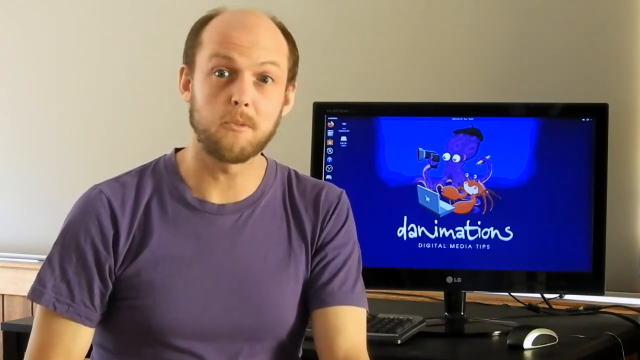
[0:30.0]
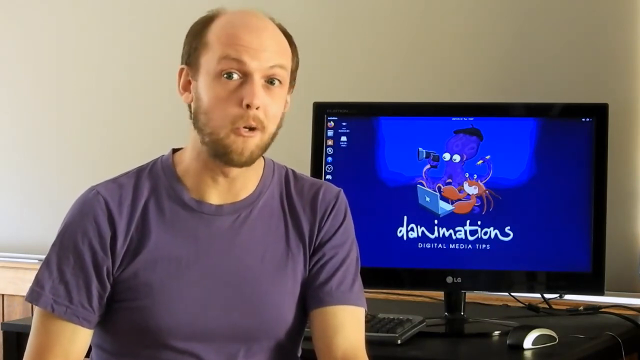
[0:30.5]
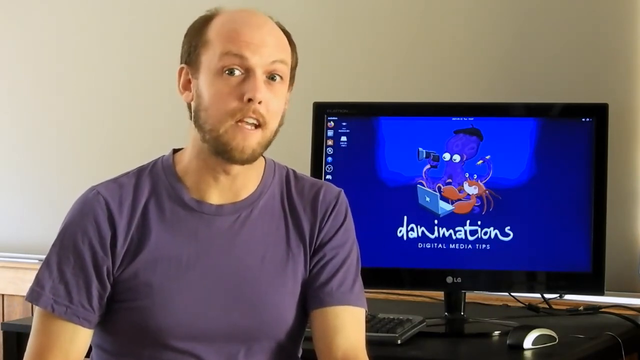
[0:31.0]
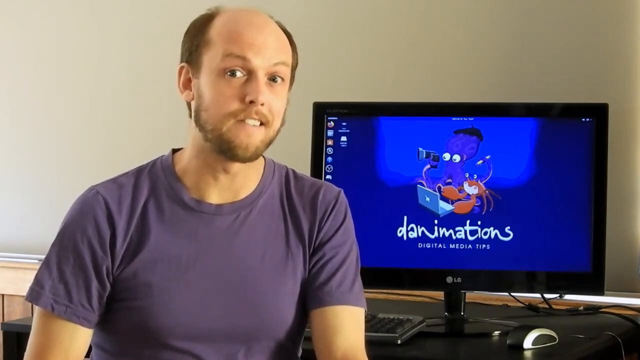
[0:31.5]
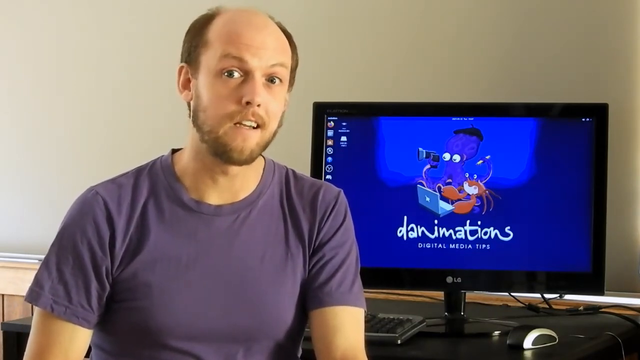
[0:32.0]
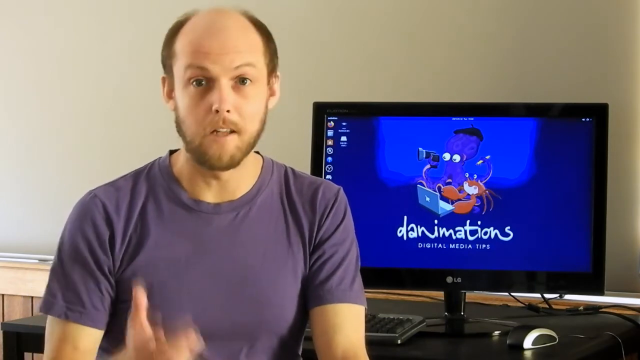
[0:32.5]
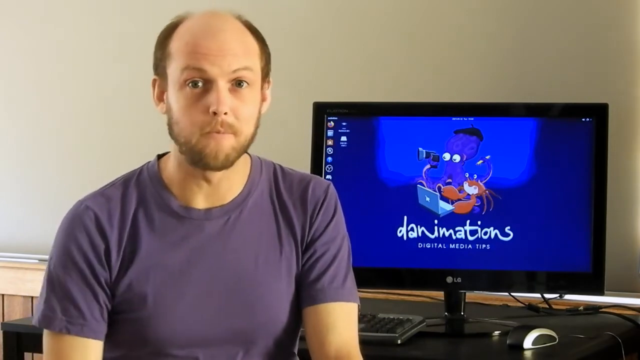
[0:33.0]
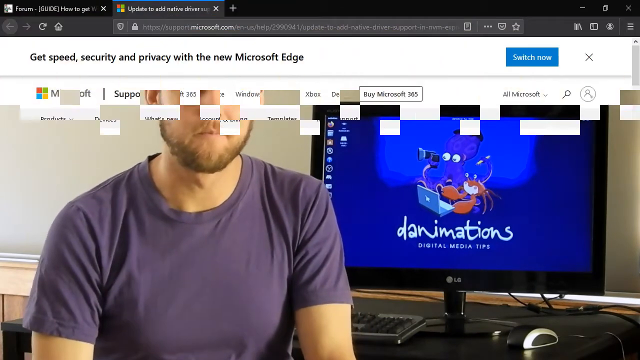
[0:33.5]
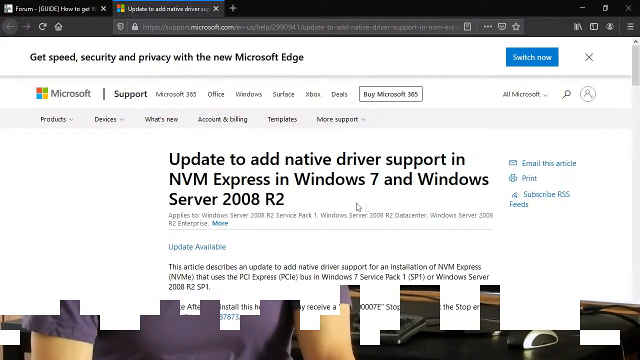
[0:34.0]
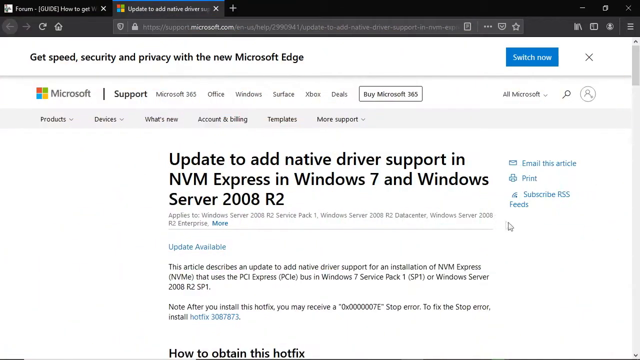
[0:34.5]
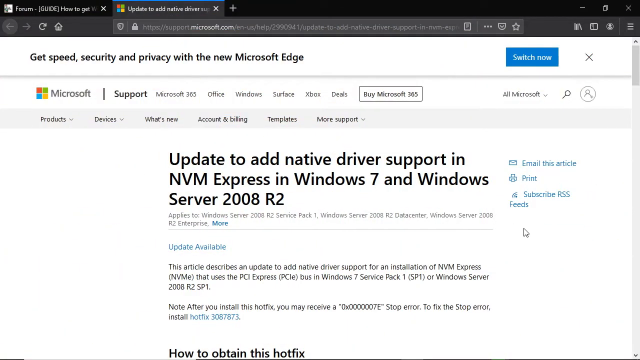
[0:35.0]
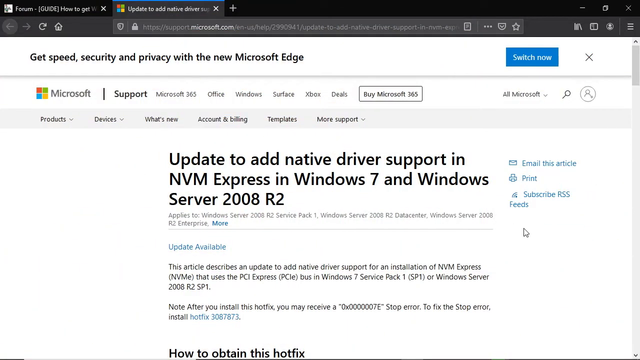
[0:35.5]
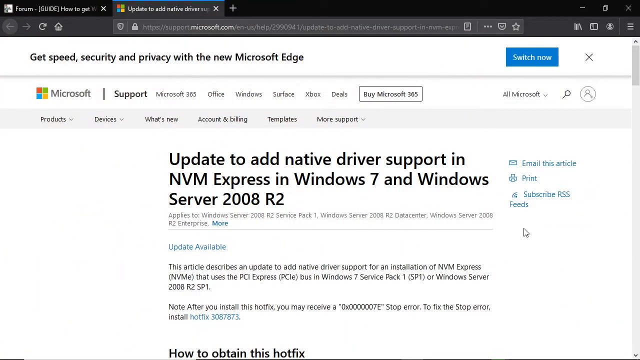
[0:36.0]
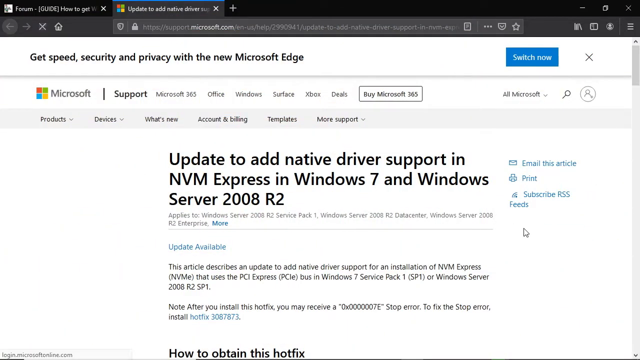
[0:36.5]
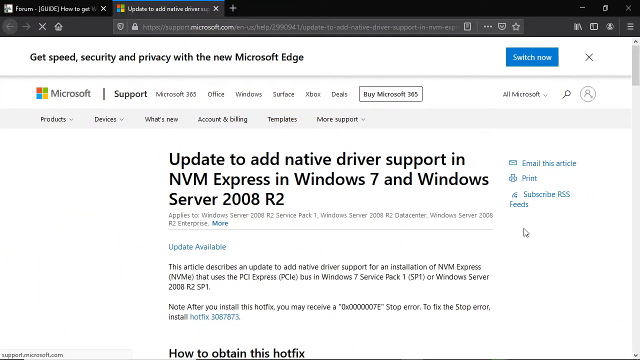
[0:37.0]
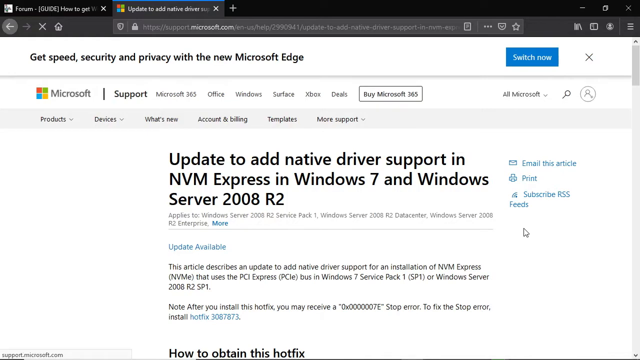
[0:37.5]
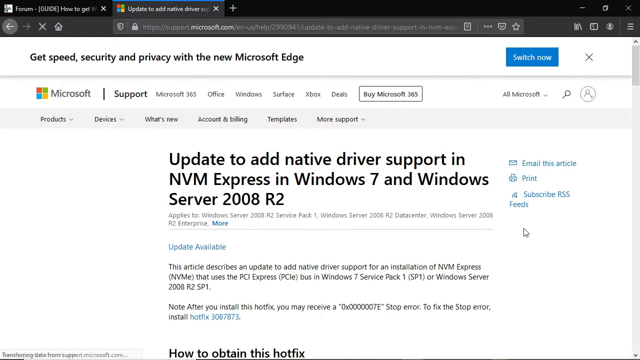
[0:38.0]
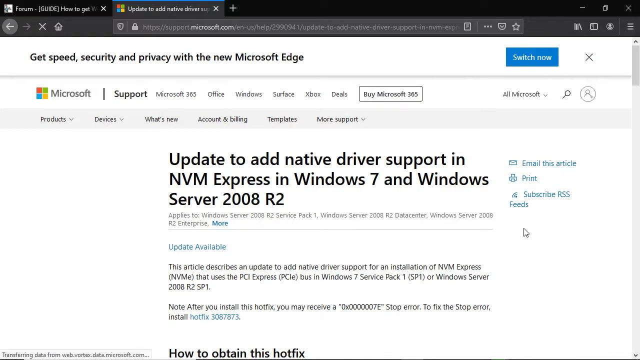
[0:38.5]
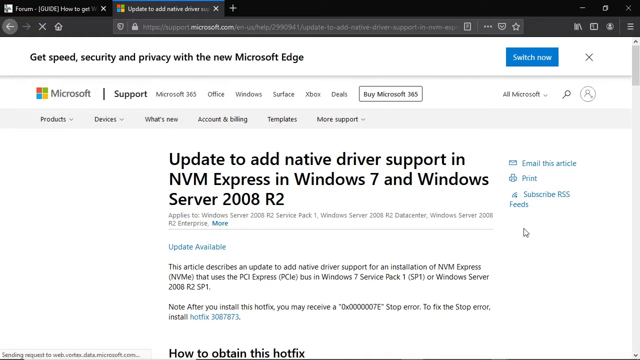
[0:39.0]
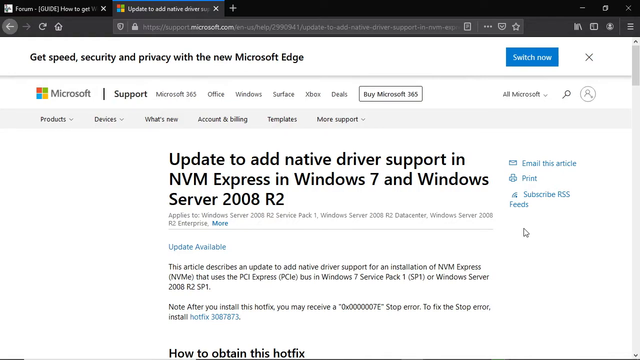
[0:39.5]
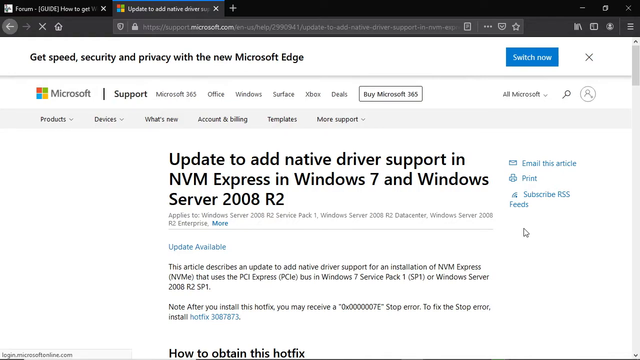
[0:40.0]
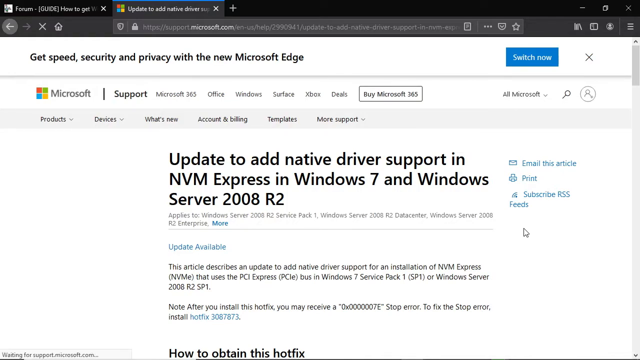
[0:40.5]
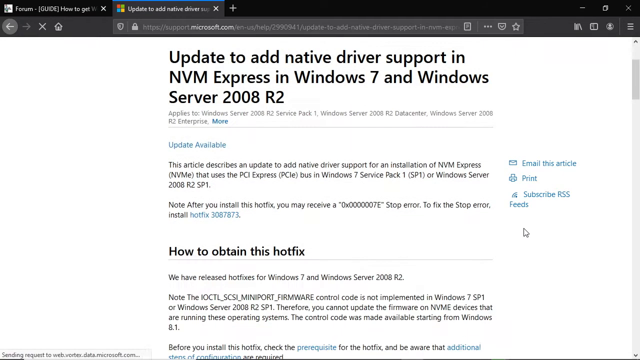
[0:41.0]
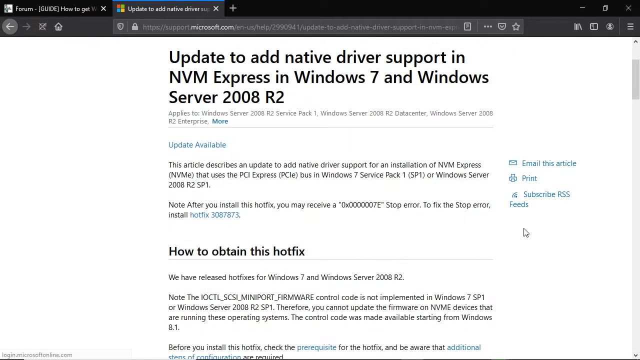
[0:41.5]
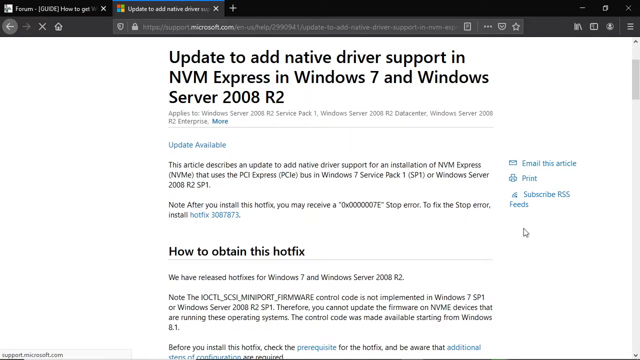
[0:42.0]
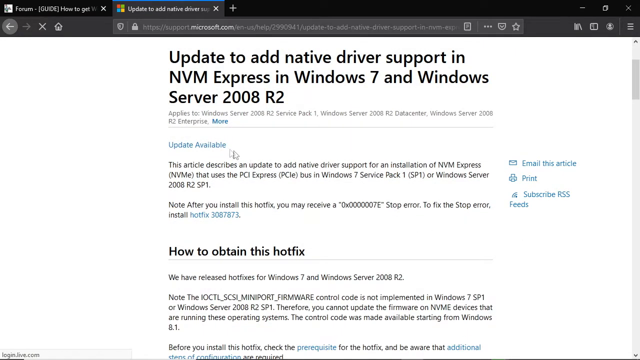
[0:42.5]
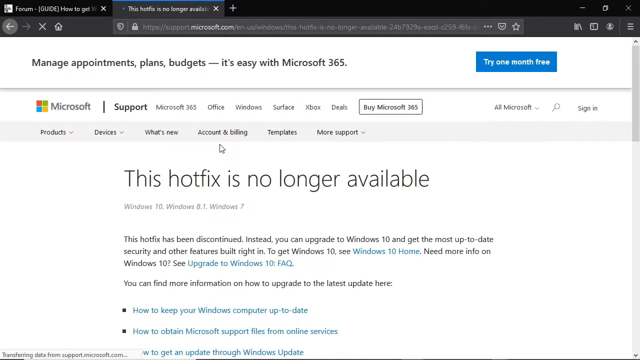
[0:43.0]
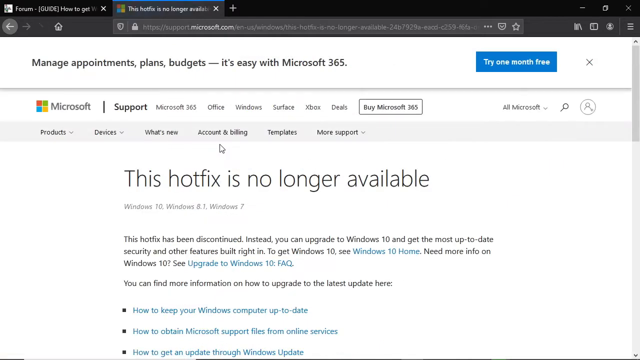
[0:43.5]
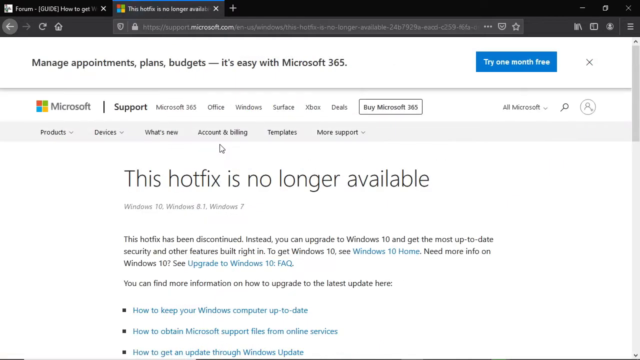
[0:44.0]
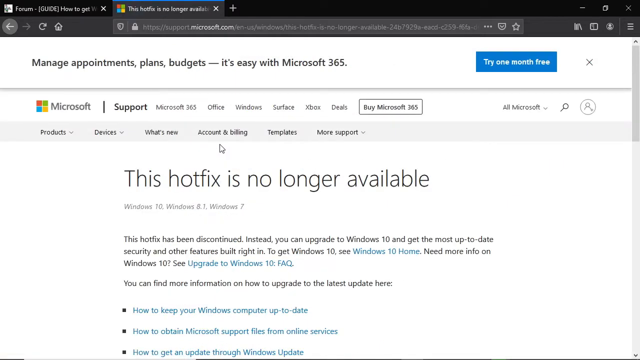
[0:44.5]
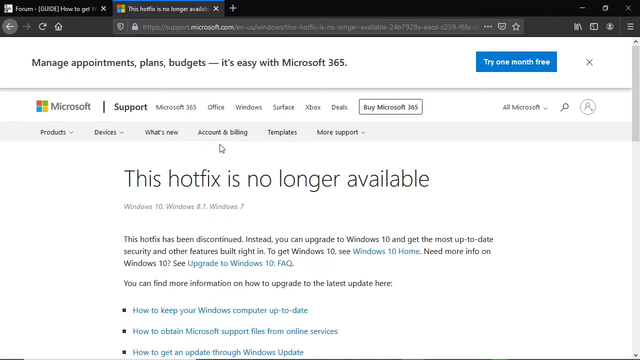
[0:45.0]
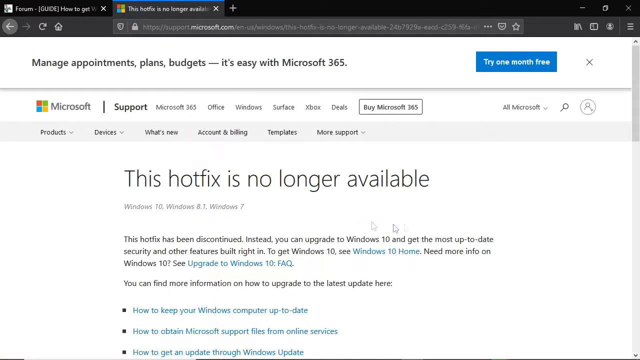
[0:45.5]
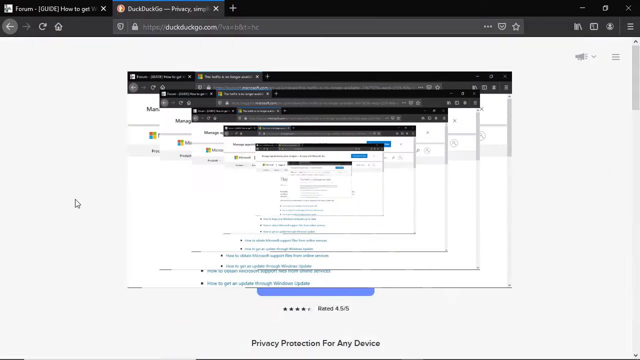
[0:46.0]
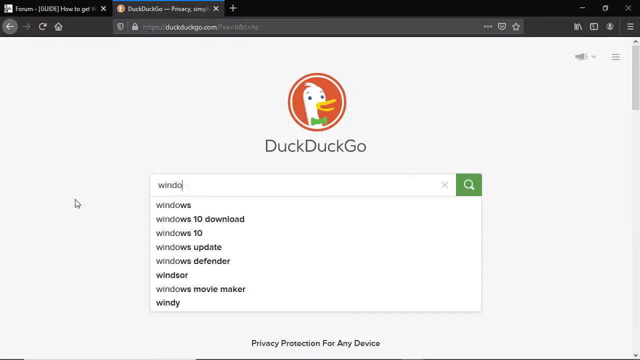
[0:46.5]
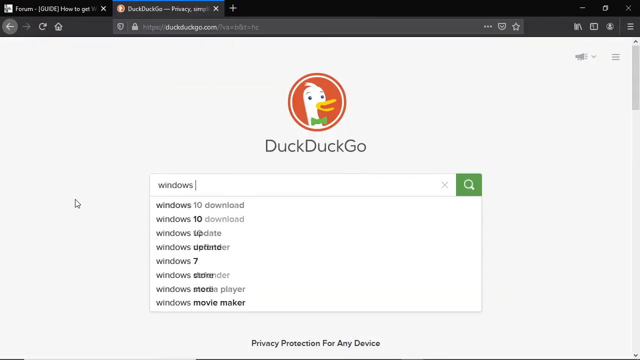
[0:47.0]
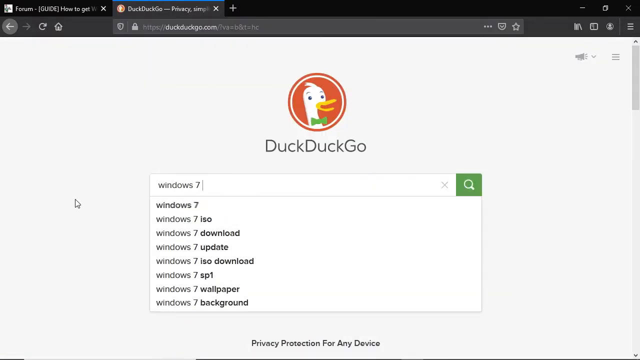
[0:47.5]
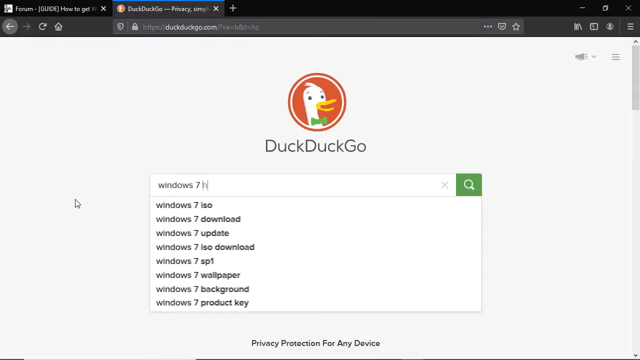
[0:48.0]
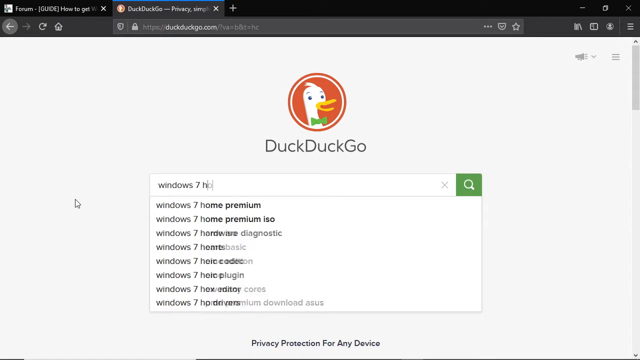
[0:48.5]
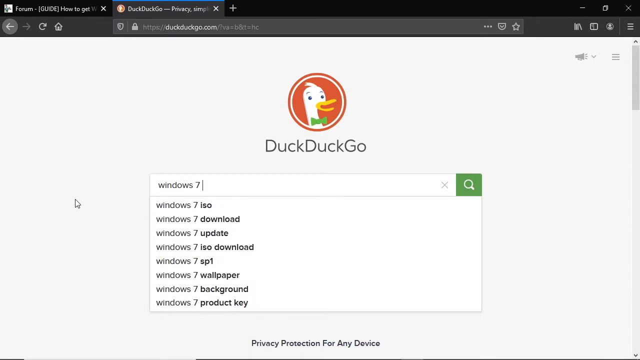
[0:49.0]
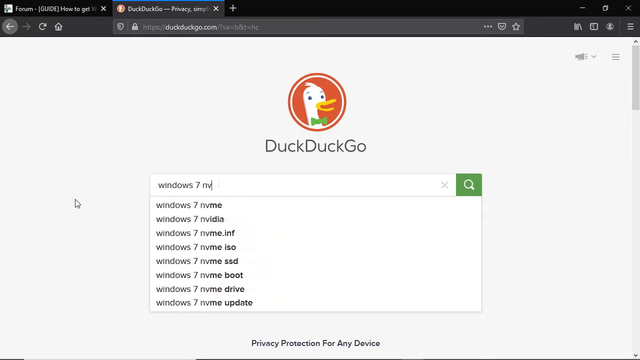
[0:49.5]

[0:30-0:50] A man, apparently middle-aged, has hair only at the sides of his head and is bald on the front. He has a beard and brownish-red hair, is white, and wears a purple T-shirt. Behind him to the right is a monitor with a black bezel and a blue wallpaper that says "Danimations" at the bottom, with a cartoon squid and octopus with a camera and laptop facing the lower left. The man then fades out with a pixelated, descending fade, and the view changes to a desktop. What appears to be Google Chrome is open, with the second tab showing a Microsoft site, with the Microsoft logo at the upper left. In the middle it says "Update to add native driver support in NVM Express and Windows 7 and Windows Server 2008 R2," and below that it lists which servers and operating systems it applies to. He clicks something, a message says "This hotfix is no longer available," and it fades out.